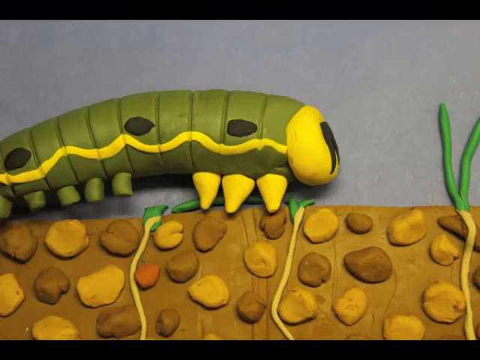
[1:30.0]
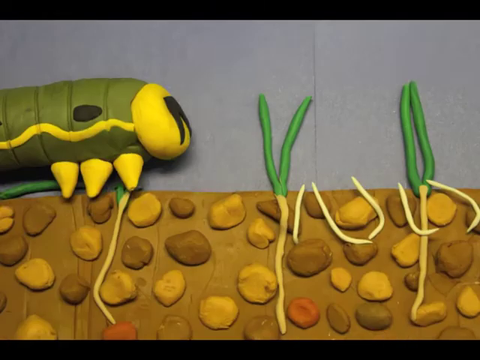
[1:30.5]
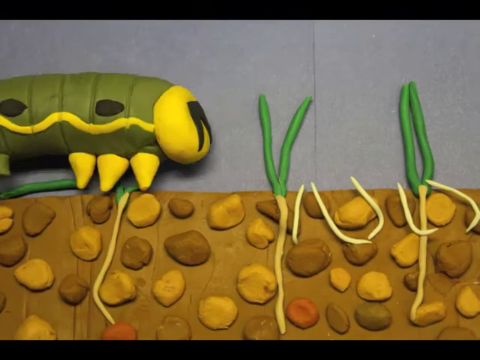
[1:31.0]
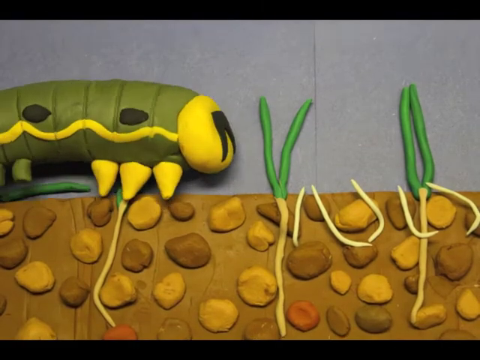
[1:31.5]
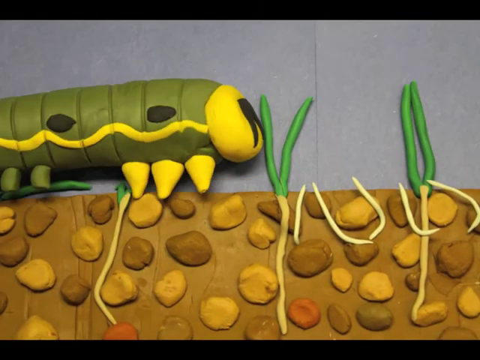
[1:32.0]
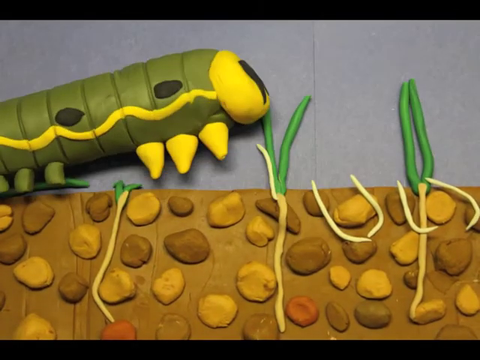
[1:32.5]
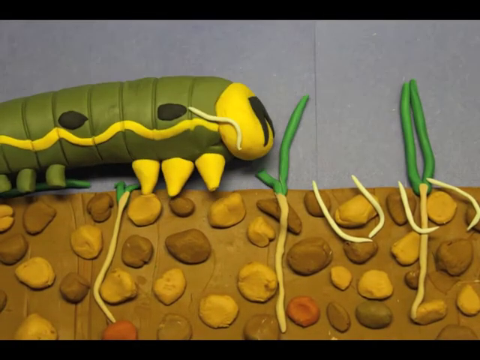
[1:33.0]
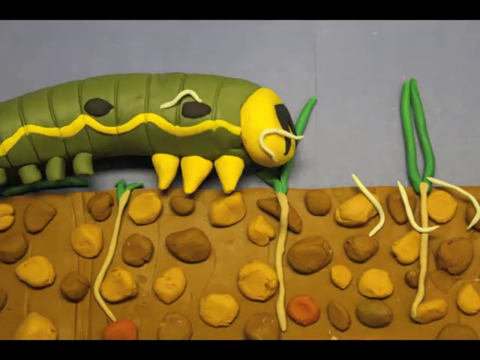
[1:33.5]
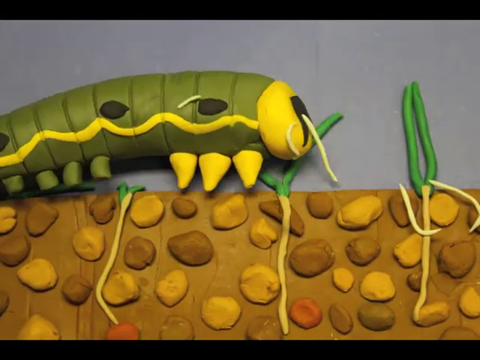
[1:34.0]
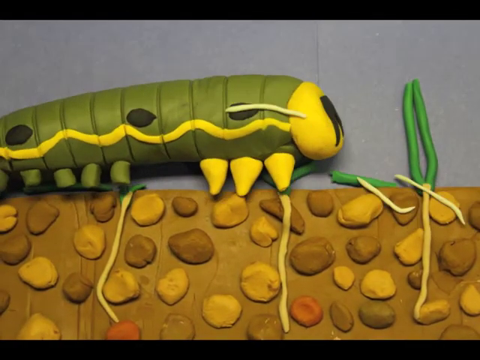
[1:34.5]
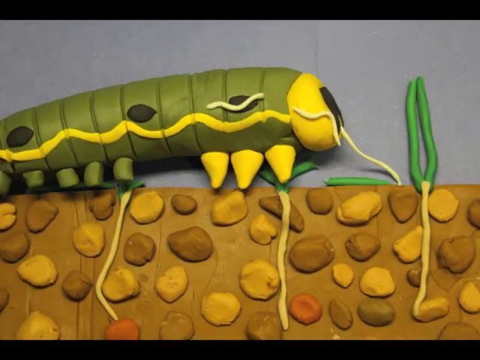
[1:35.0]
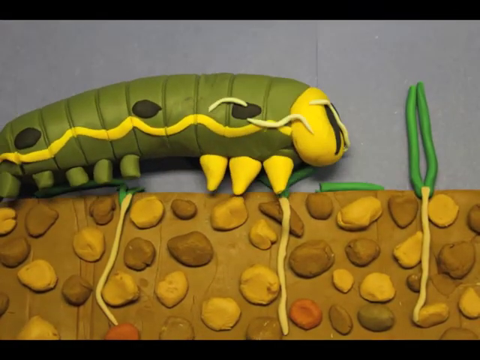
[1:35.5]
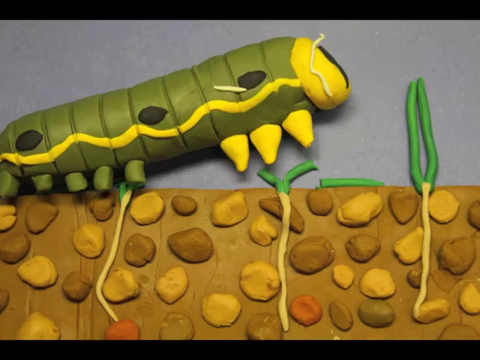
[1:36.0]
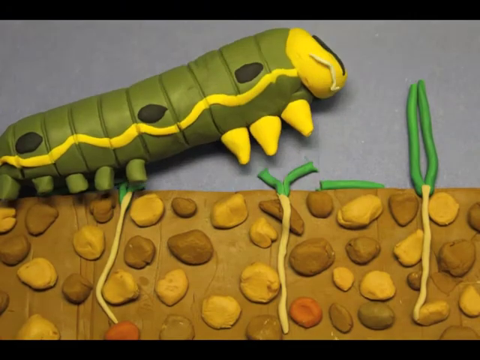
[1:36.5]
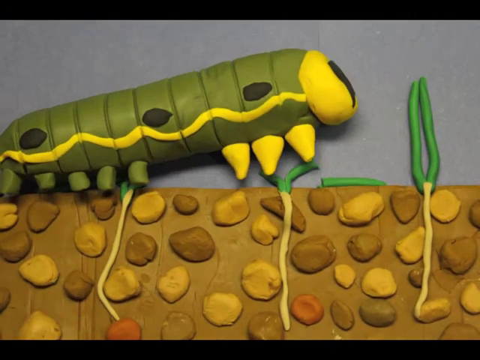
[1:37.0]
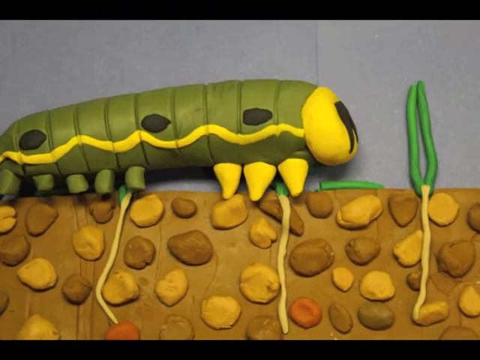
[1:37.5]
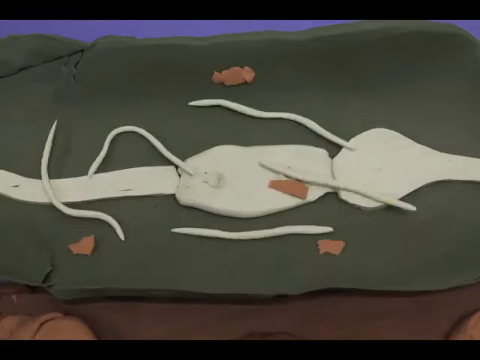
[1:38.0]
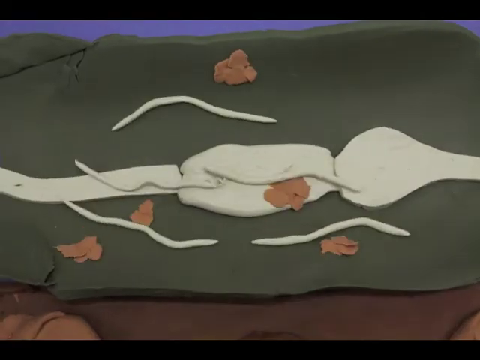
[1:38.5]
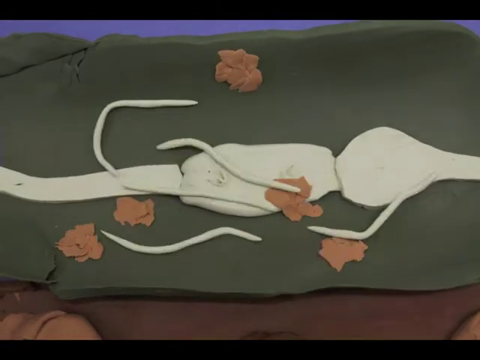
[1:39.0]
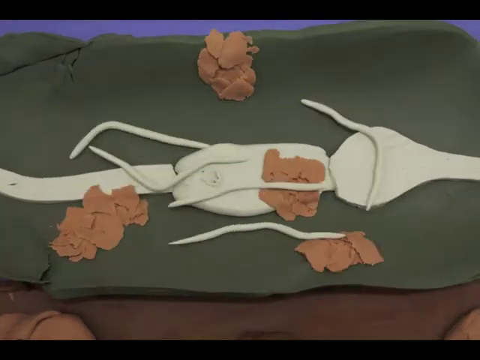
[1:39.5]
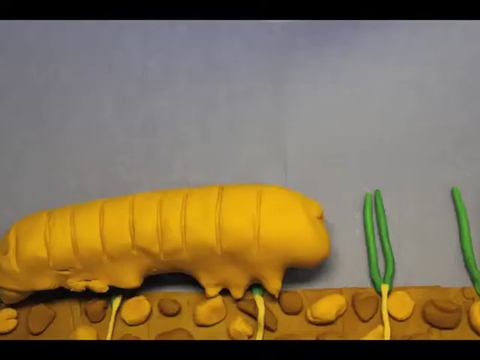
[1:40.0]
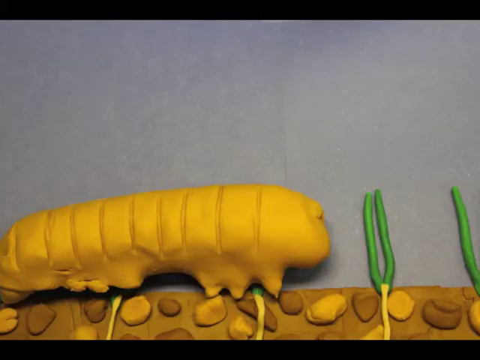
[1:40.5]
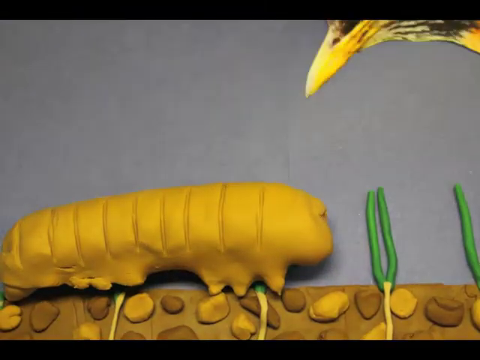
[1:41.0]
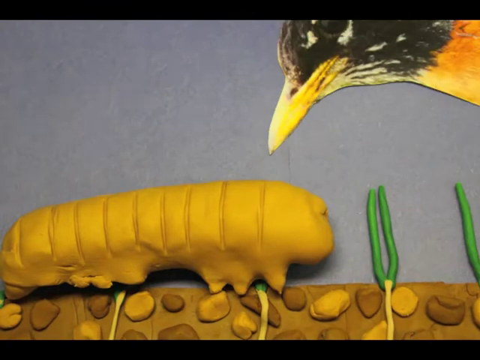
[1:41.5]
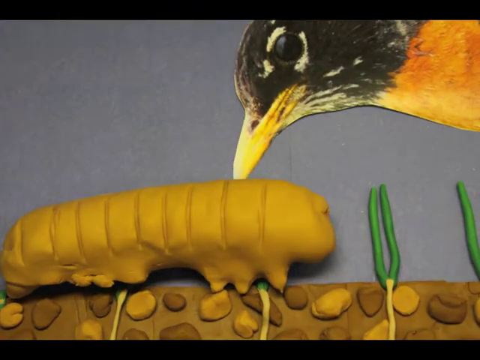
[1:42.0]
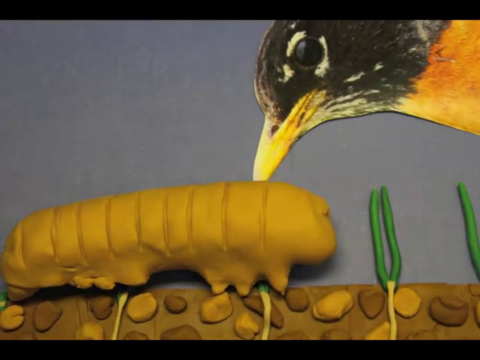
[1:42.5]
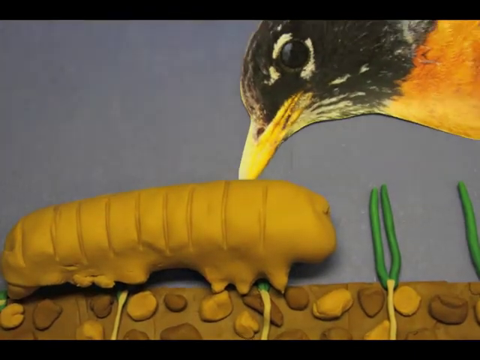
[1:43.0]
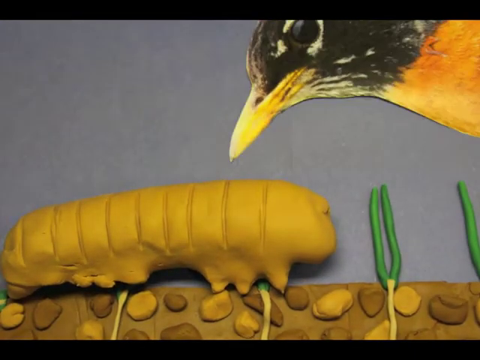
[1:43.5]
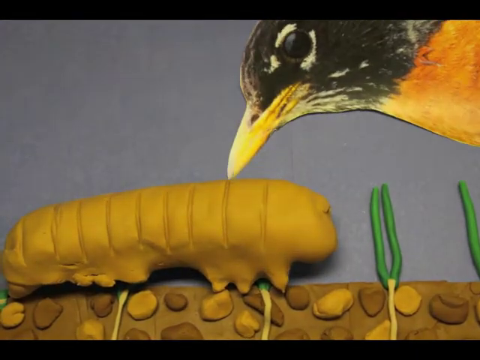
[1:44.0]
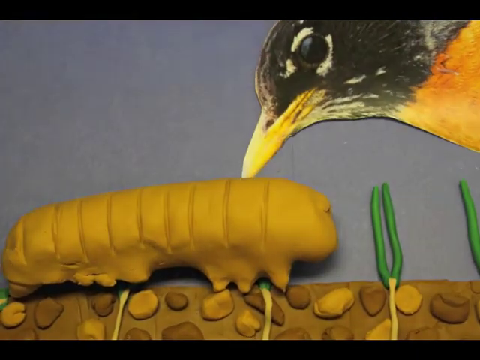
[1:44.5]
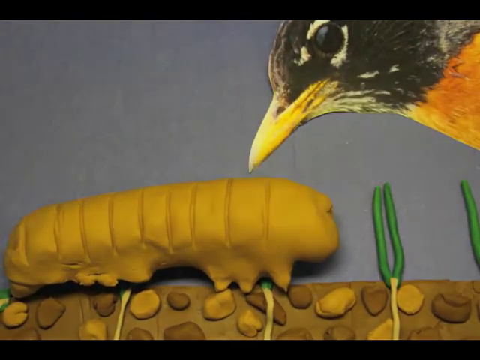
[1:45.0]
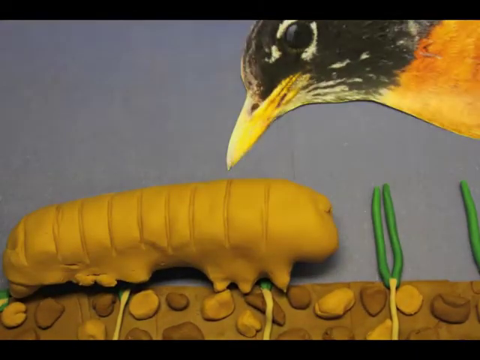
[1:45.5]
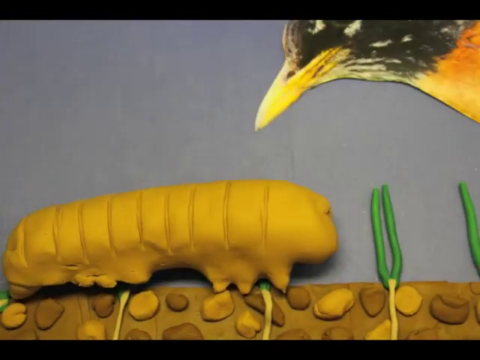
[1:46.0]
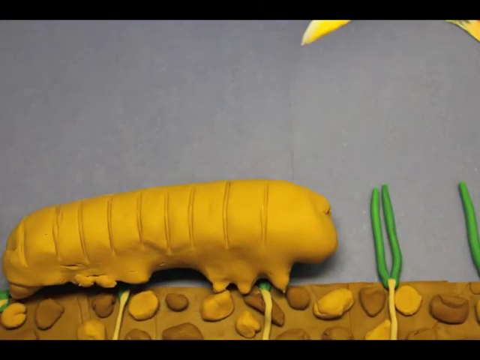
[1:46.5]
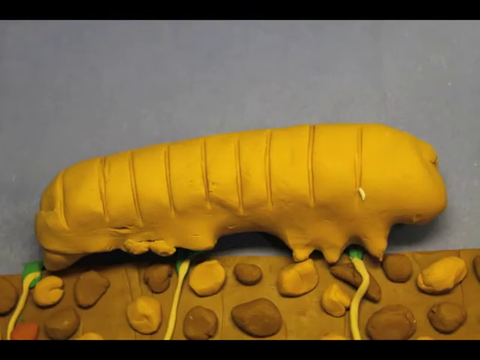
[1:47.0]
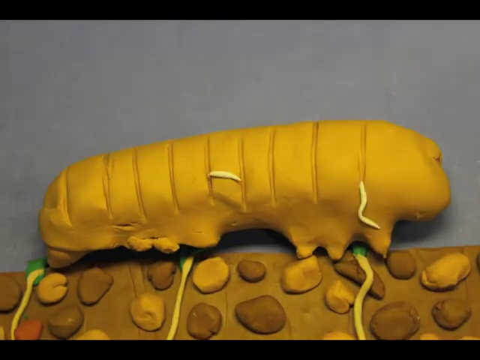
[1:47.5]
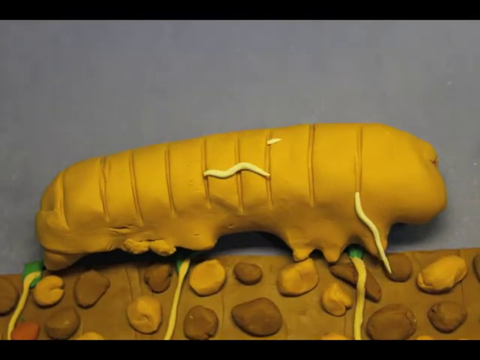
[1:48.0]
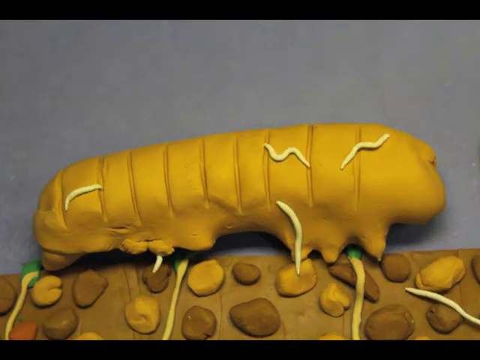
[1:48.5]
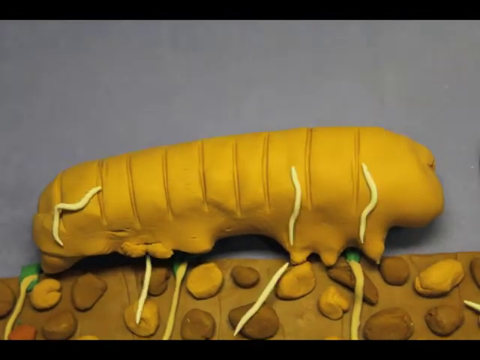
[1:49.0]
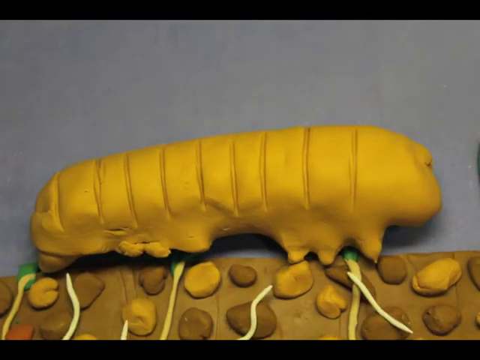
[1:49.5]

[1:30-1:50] The green, yellow and black clay caterpillar moves along the top of the soil, eating the plants in its way. In the background is blue paper imitating the sky, and beneath the caterpillar is soil made of light and dark brown, beige and orange clay, with the plants' roots running through it. When the caterpillar reaches about the middle of the screen, the worms, or types of nematodes, attack it through its mouth as it eats the plants close to the soil. They jump onto the caterpillar and attack it through its skin, then get into its digestive tract and destroy its body from the inside, leaving what seems to be a dried-up caterpillar skin. A cutout picture of a bird then enters from the top right of the screen, picking at the caterpillar.